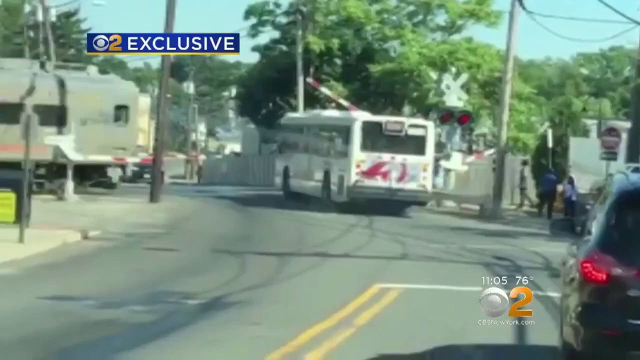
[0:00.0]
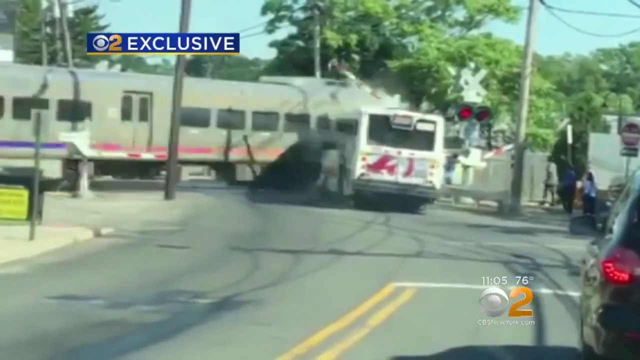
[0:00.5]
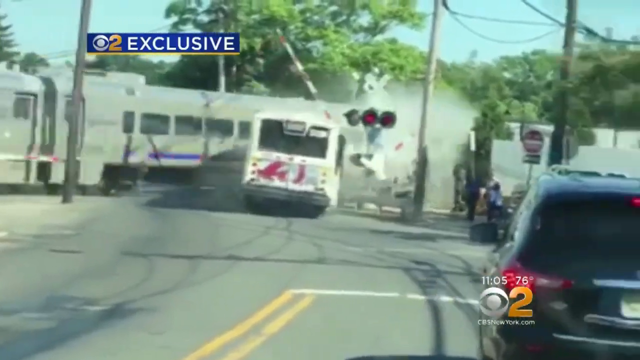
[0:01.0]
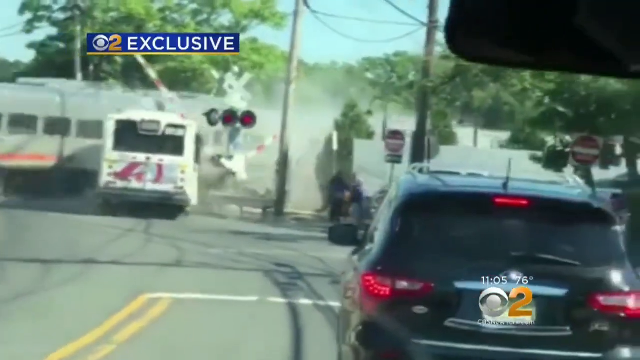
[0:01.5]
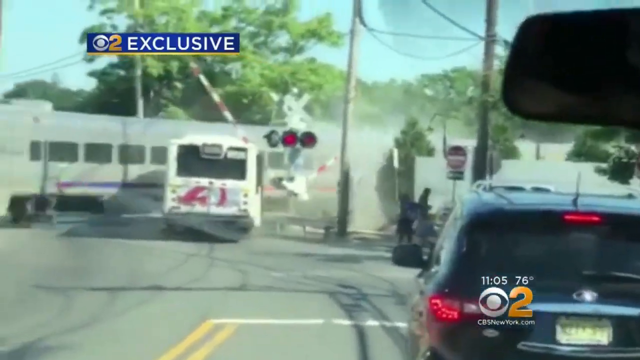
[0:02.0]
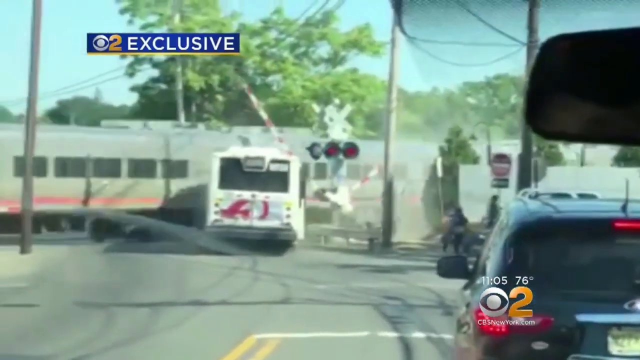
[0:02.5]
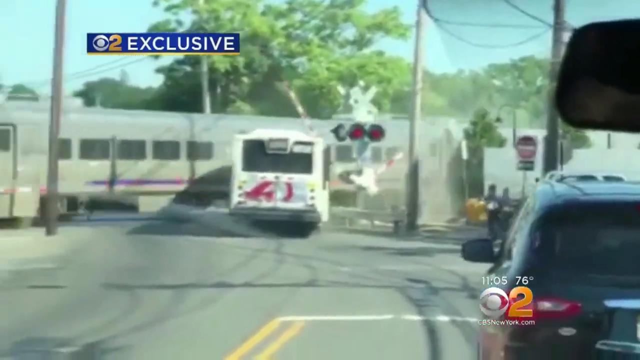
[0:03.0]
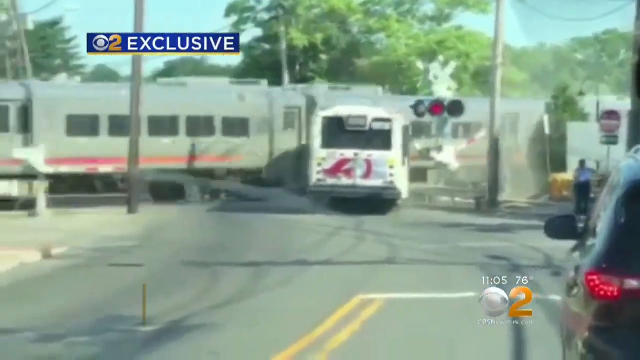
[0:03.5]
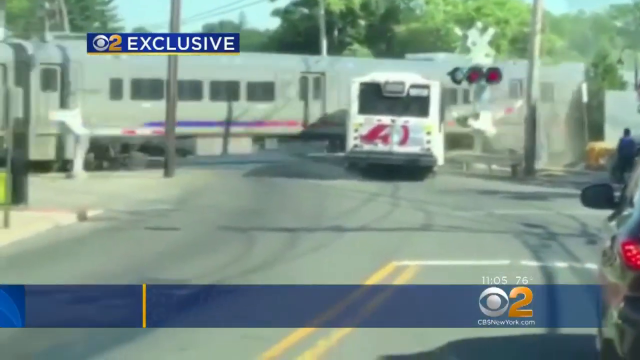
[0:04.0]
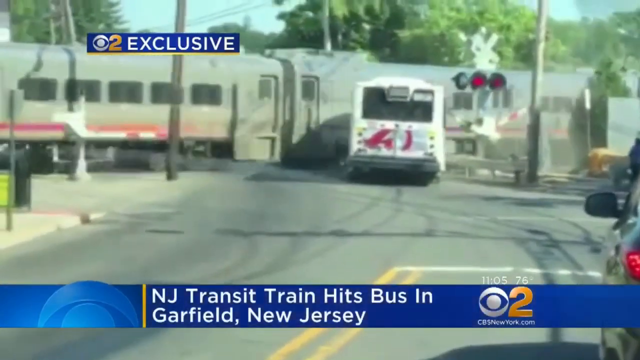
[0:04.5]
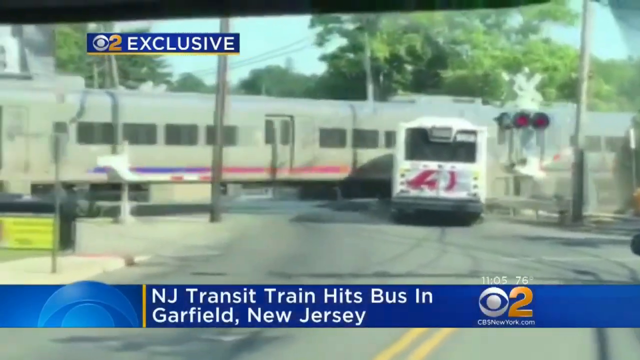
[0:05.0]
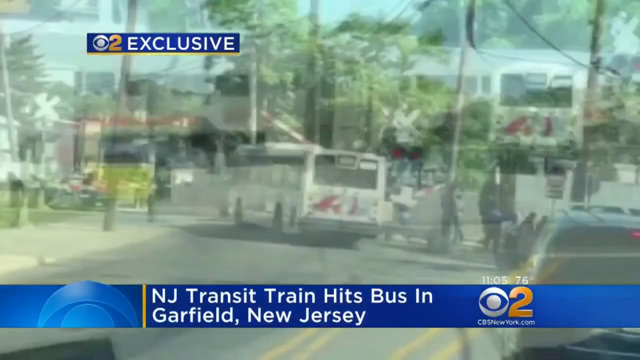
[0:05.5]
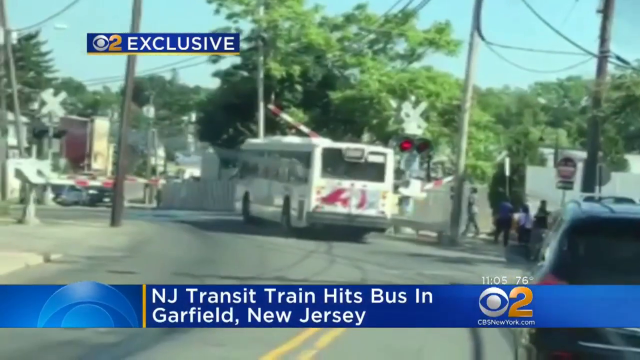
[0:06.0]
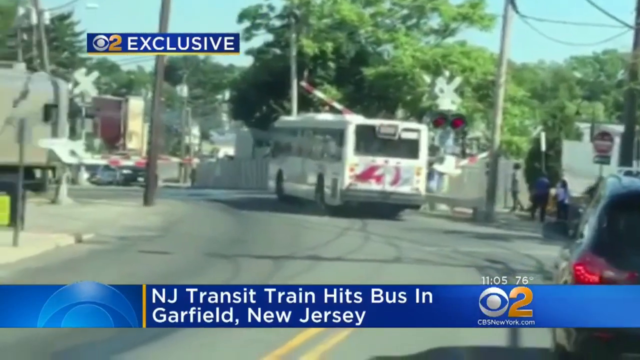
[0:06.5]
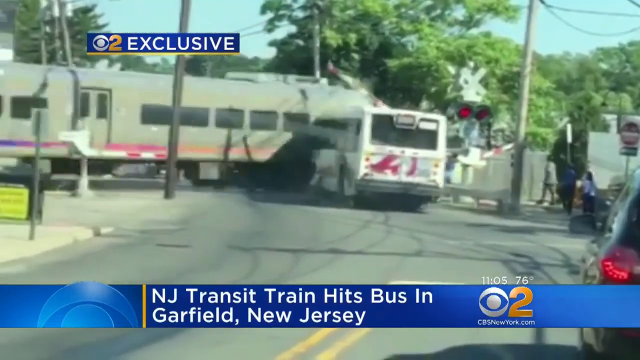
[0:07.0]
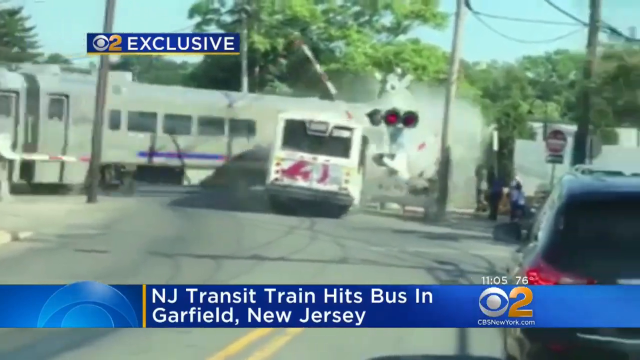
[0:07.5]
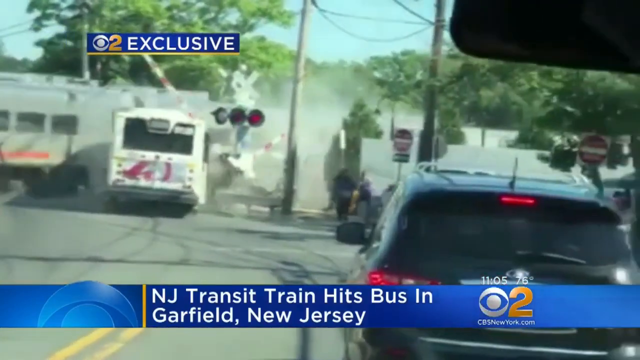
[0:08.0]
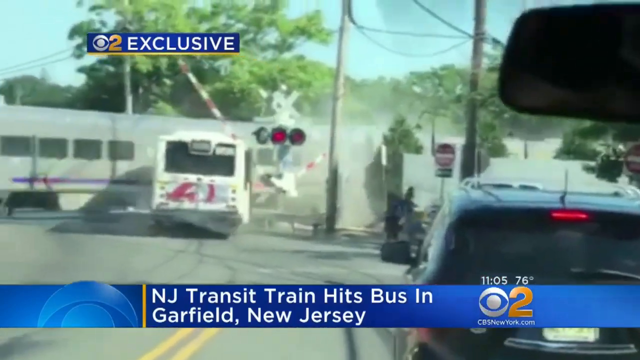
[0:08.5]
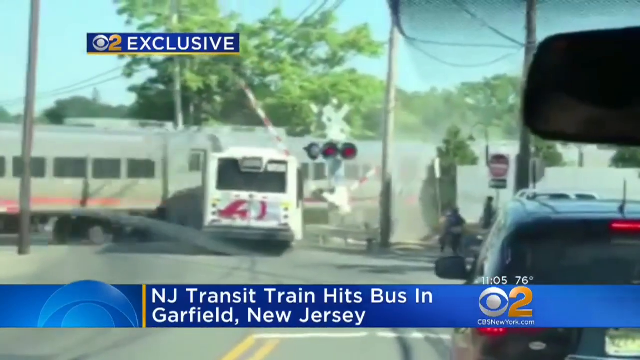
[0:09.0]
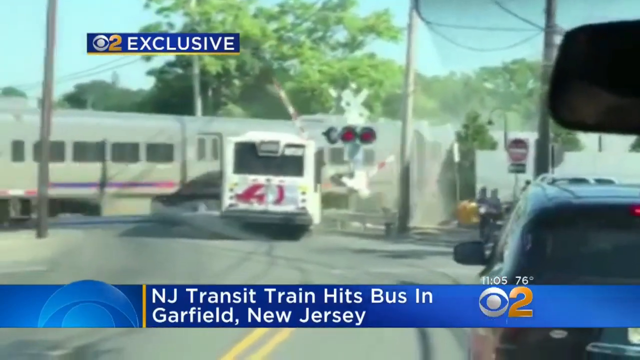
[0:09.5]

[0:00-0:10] The video is a segment from CBS New York's CBS2 exclusive coverage. The title reads "NJ Transit Train Hits Bus in Garth, New Jersey." A train hits a bus: an NJ Transit train in motion is positioned behind a bus marked with the number 41. The crossing gates are down, and the road is framed by utility poles and green trees. Part of a person's head and shoulder appears in the right foreground, suggesting the footage may have been taken from a bystander's perspective. A time stamp in the bottom right reads "11-05-76". Cars are nearby, and people are walking around nearby.